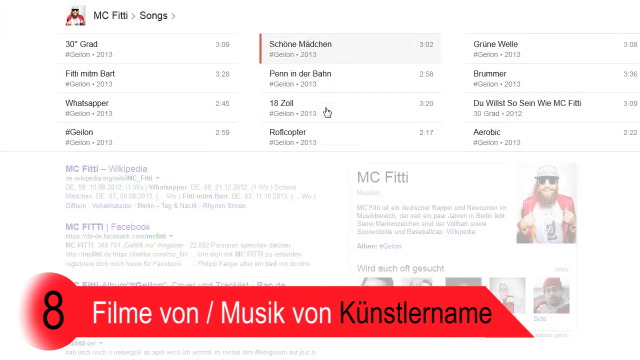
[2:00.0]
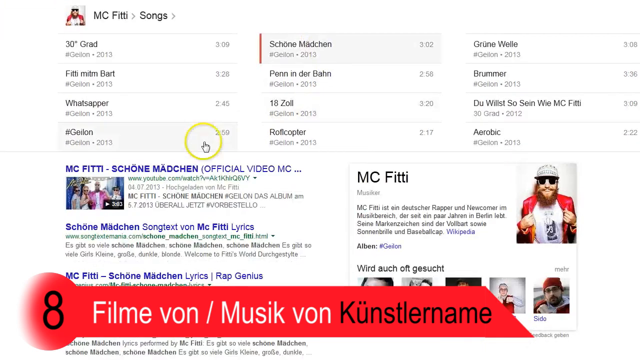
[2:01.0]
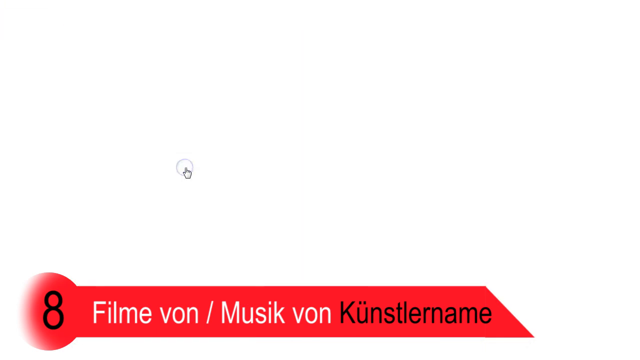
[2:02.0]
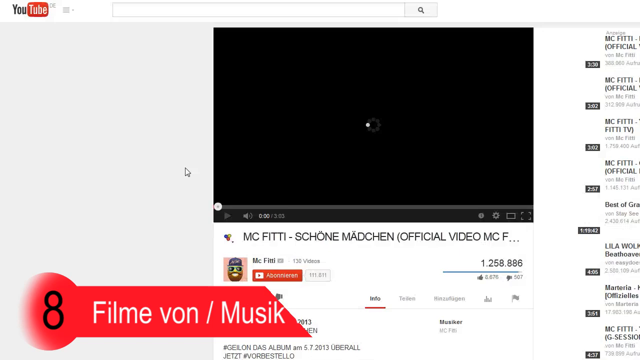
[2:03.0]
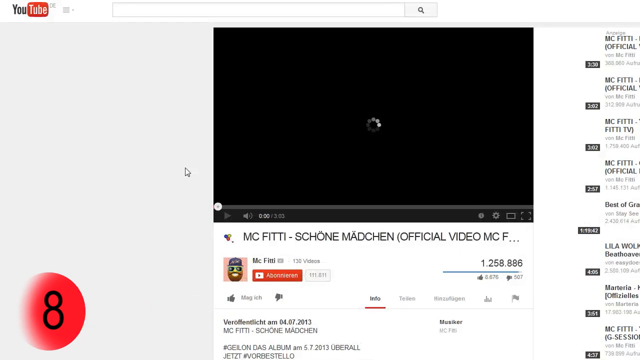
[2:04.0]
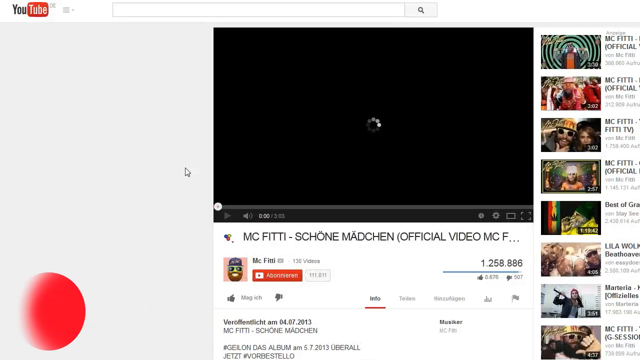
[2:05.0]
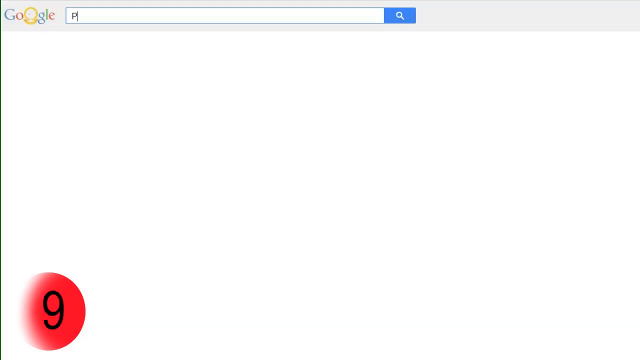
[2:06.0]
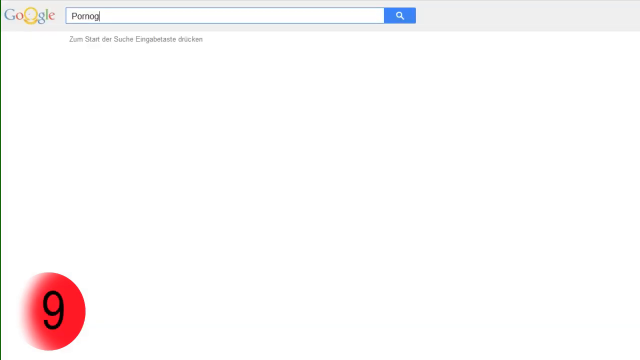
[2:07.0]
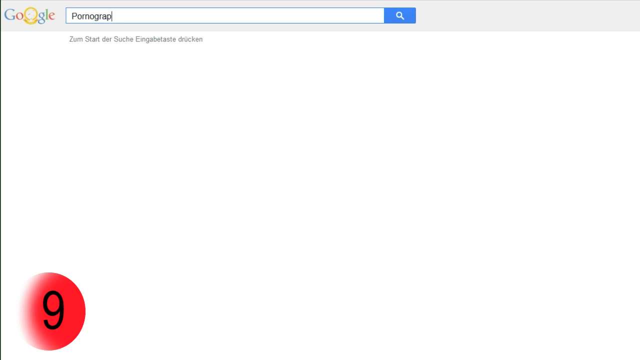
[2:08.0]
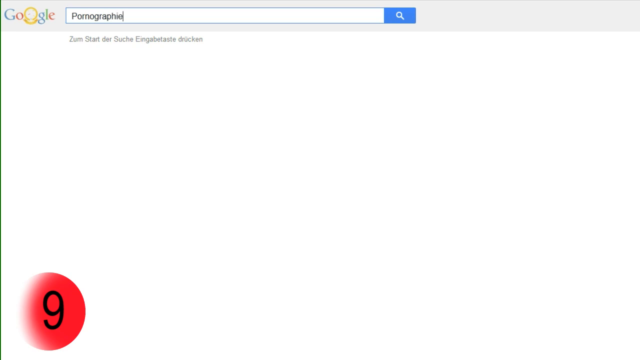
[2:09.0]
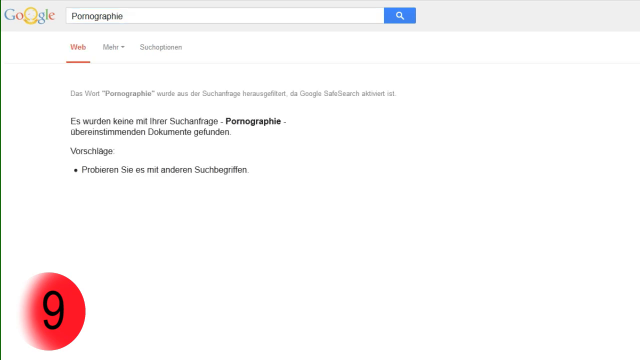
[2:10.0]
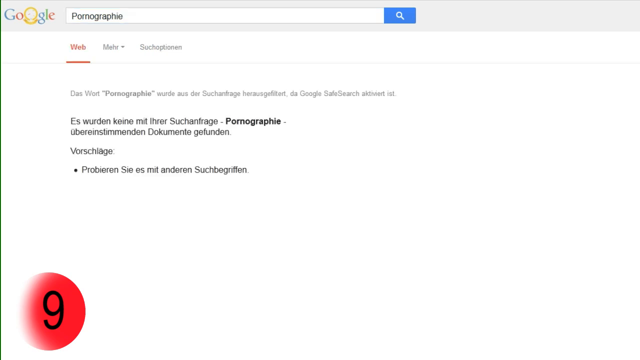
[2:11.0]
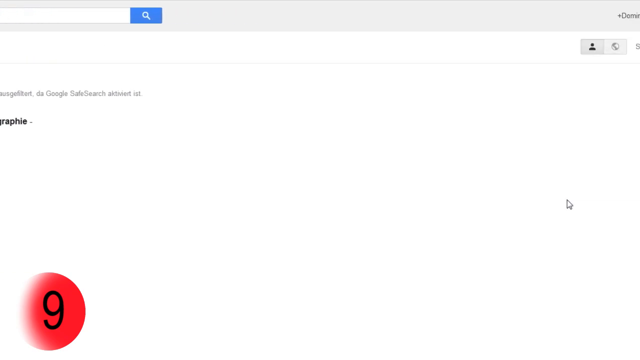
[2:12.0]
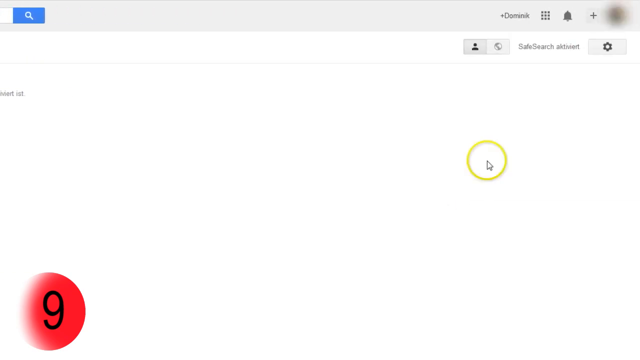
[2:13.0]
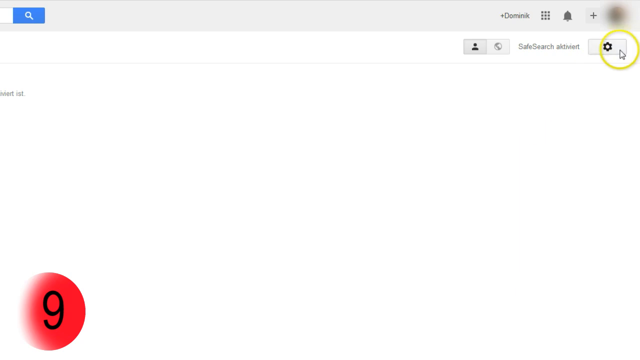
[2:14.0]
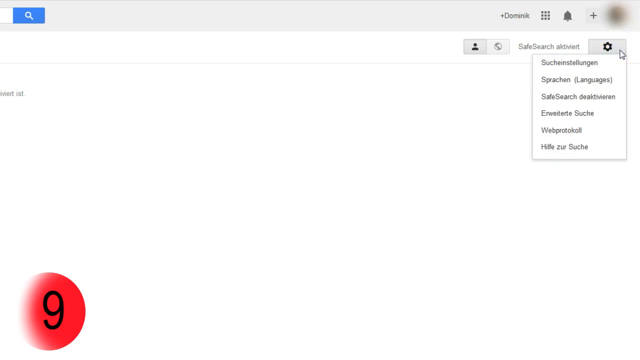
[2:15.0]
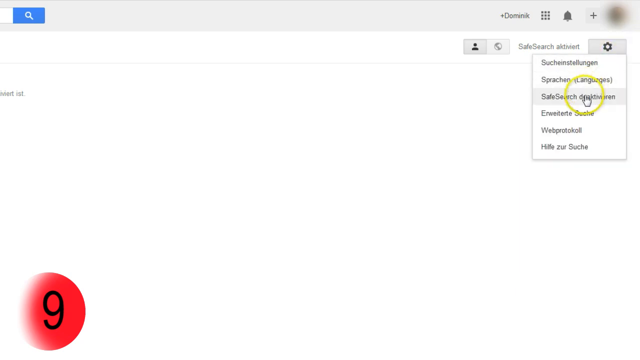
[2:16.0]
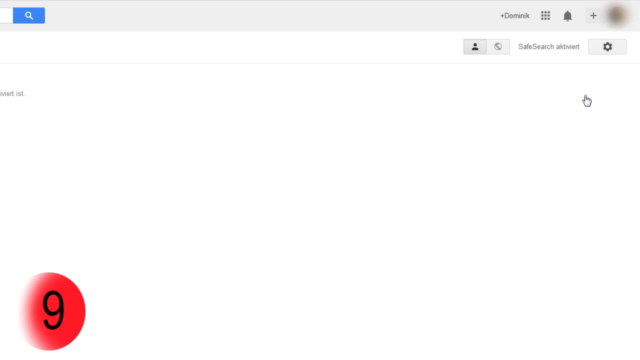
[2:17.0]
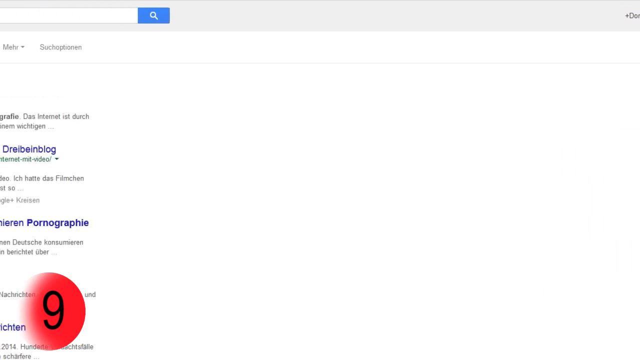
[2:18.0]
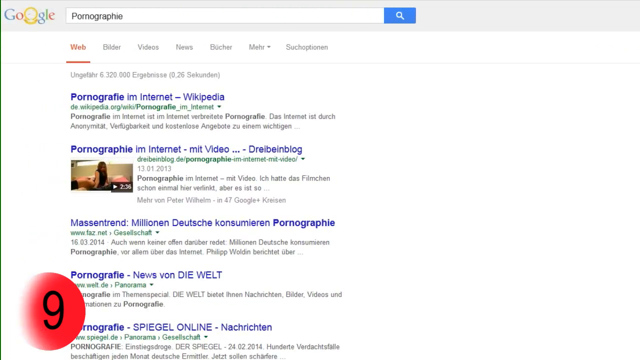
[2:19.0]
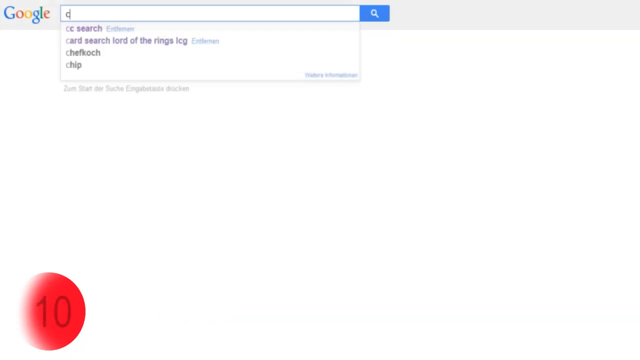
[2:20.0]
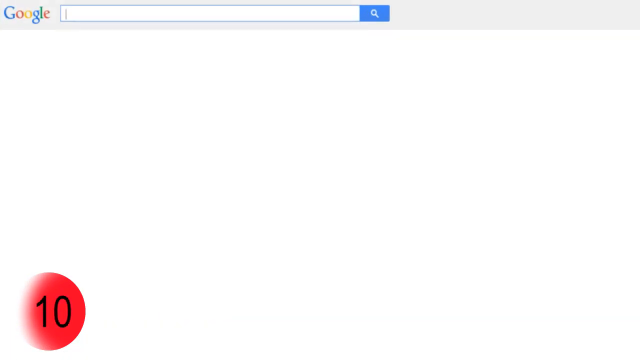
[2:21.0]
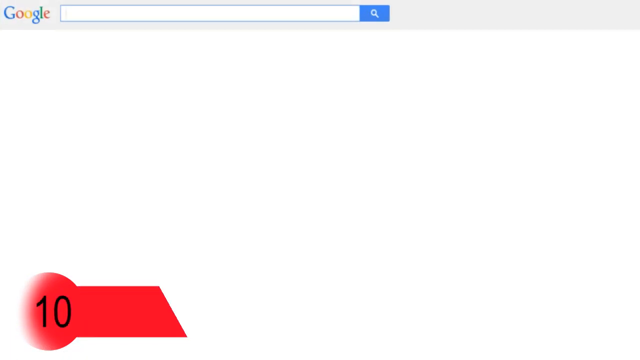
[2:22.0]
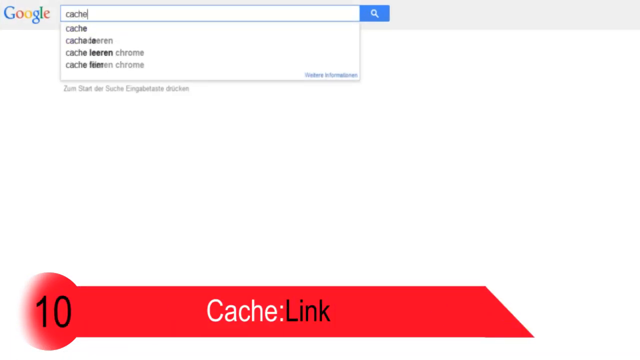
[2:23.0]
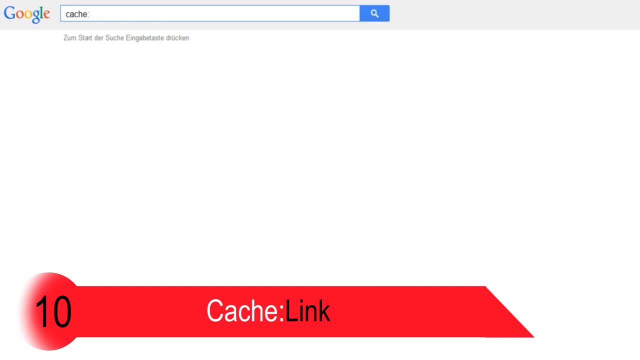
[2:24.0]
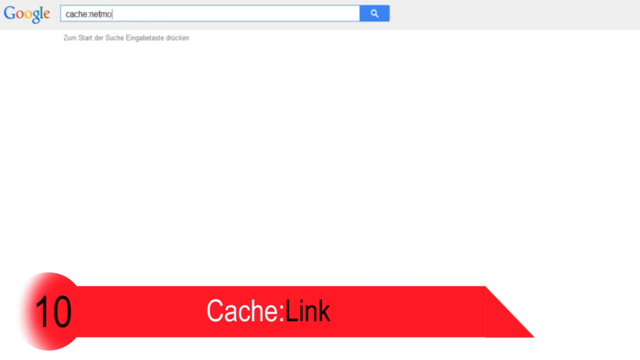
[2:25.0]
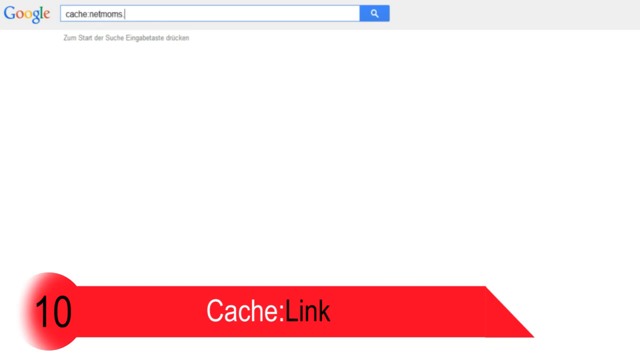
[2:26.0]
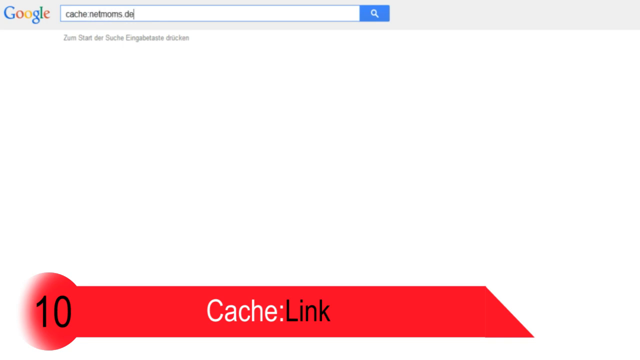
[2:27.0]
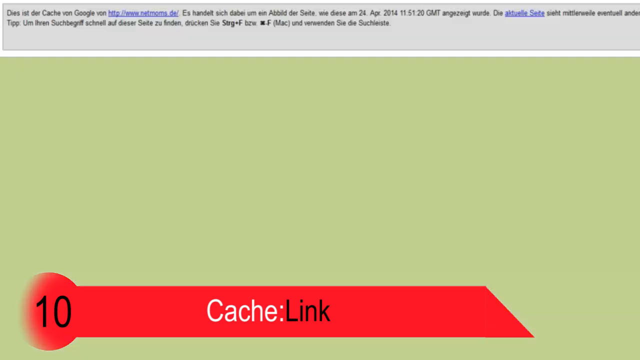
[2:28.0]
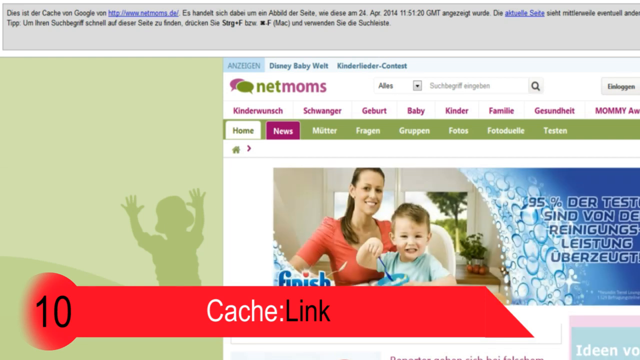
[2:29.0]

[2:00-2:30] Information about the music artist MC Fitti is shown, including multiple songs with their year, hashtag and duration. Below that are his Wikipedia information and his Facebook, and at the bottom of the screen is the number 8 on a red banner followed by words in German. All of the words on screen are in German. The person clicks on one of the songs, and the search results change to music videos on YouTube for that song; they click one and open the YouTube page. They quickly open another tab and type in "pornography", then zoom in, scroll all the way to the right and go to settings. They click the third option for safe search and scroll back to the search results, which show multiple results. They delete the search and type in "cache:netmoms". After pressing search, a red banner appears at the bottom of the screen with the number 10 and the text "cache:link". They click on the website, which shows a website called Net Moms featuring a mom and her son at the dinner table. They circle some words at the top of the screen and zoom in.